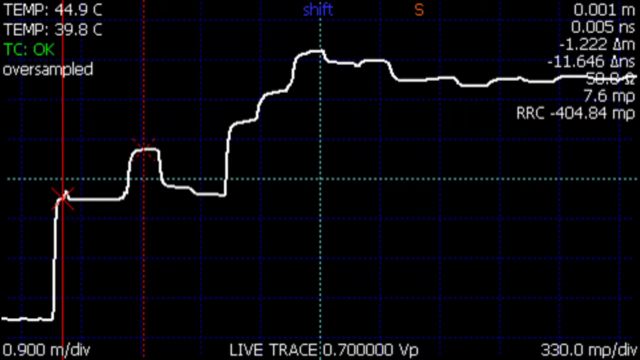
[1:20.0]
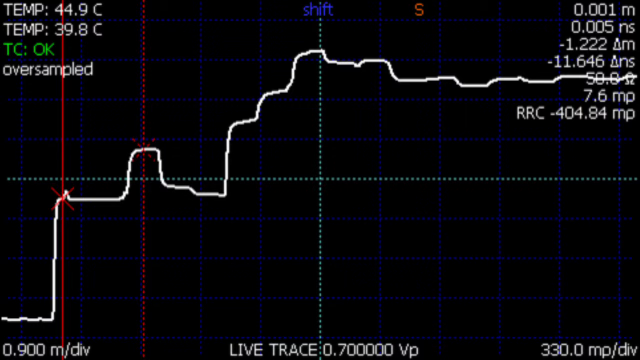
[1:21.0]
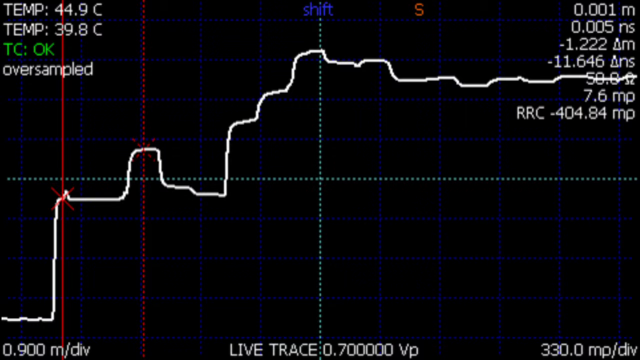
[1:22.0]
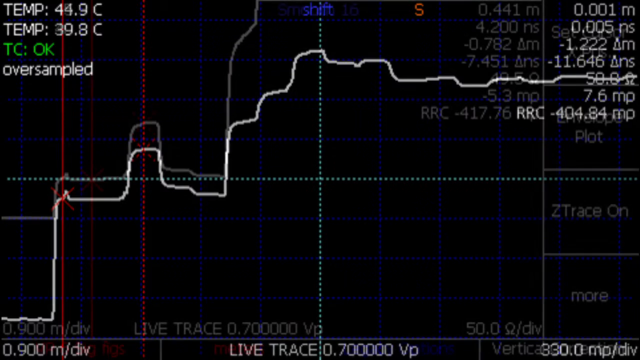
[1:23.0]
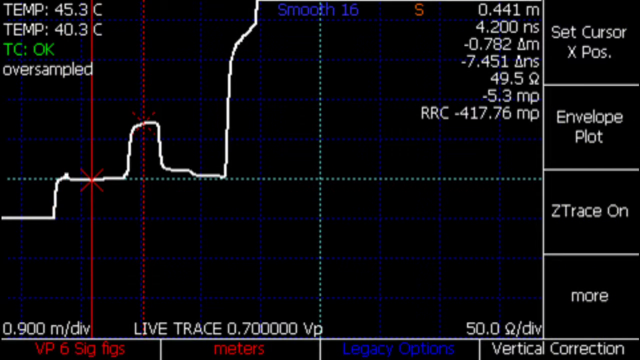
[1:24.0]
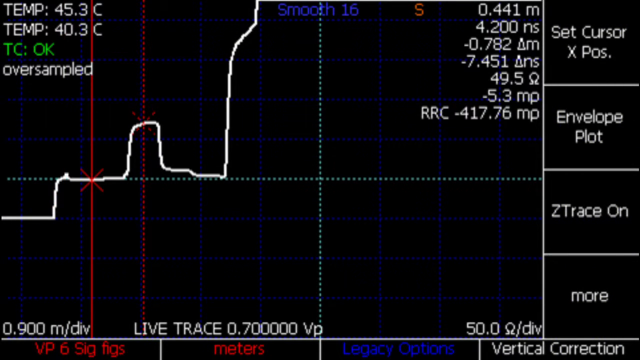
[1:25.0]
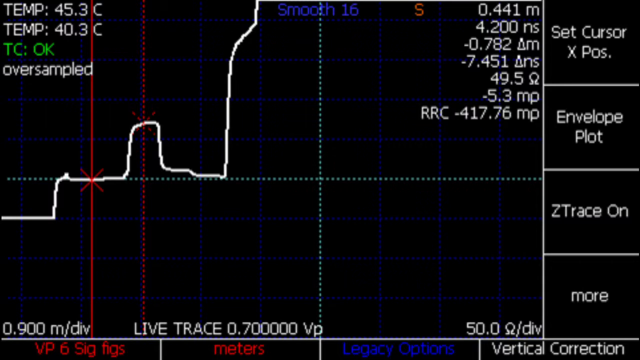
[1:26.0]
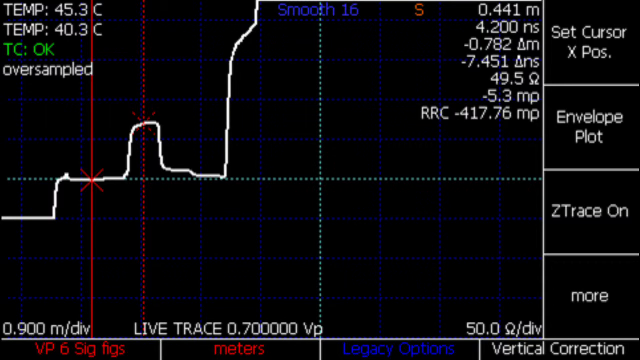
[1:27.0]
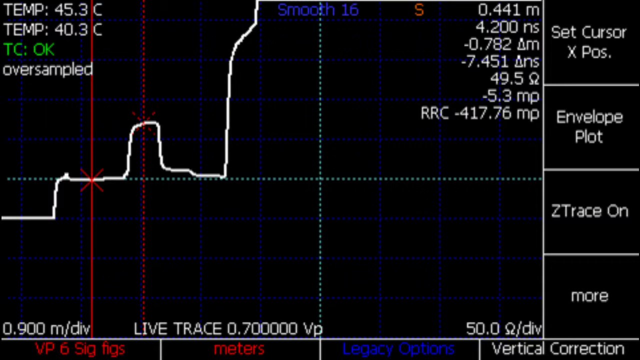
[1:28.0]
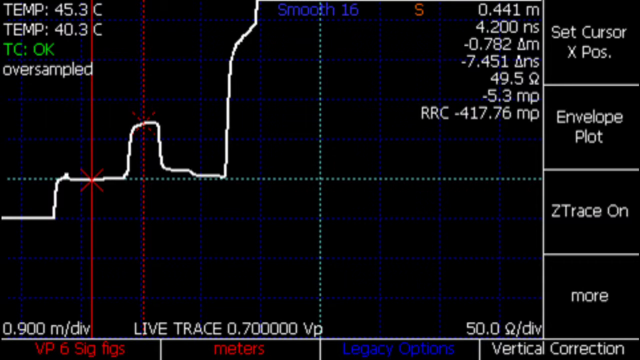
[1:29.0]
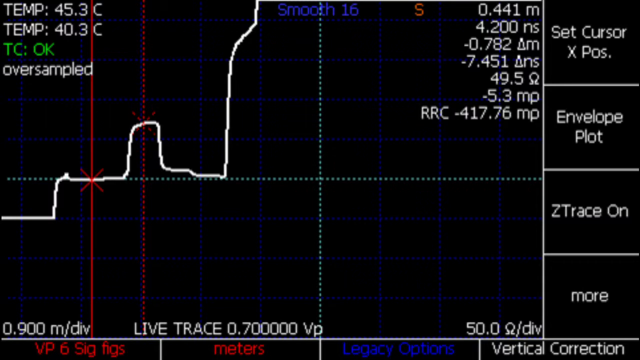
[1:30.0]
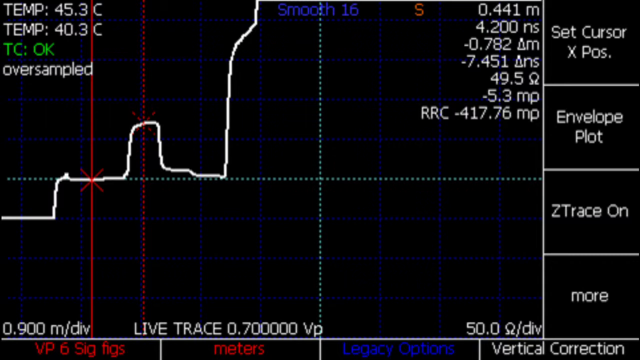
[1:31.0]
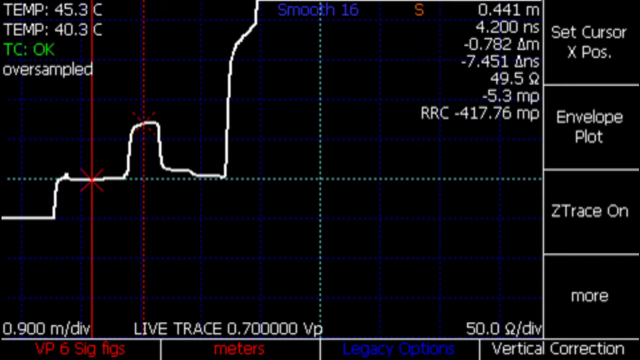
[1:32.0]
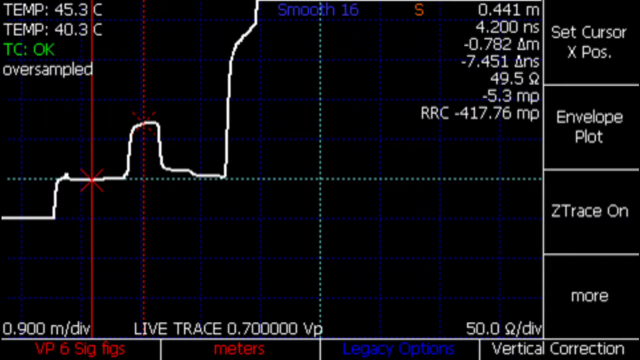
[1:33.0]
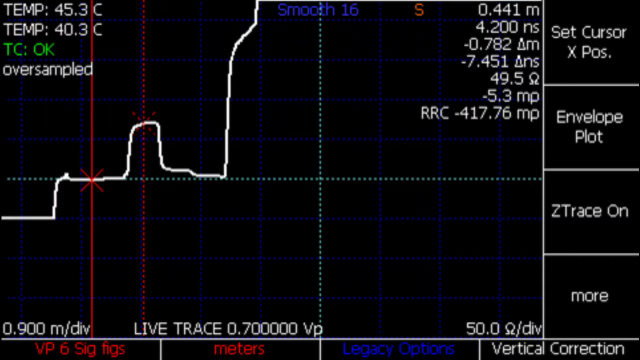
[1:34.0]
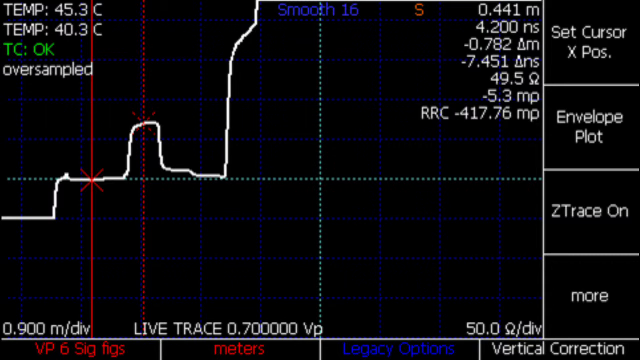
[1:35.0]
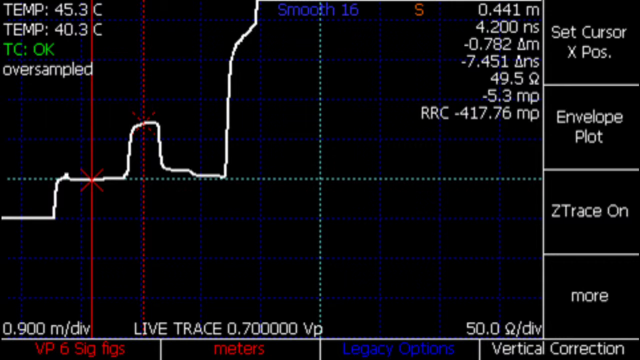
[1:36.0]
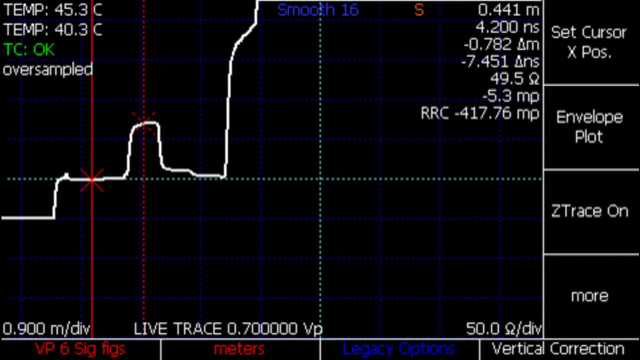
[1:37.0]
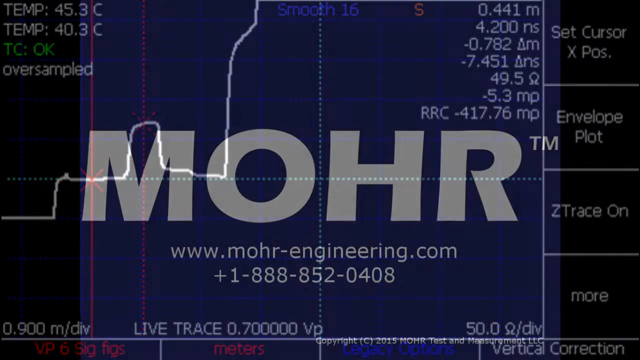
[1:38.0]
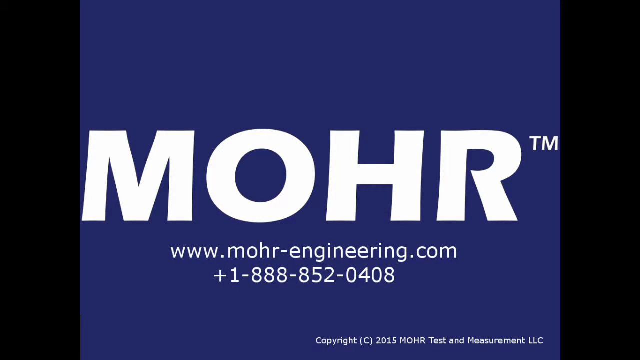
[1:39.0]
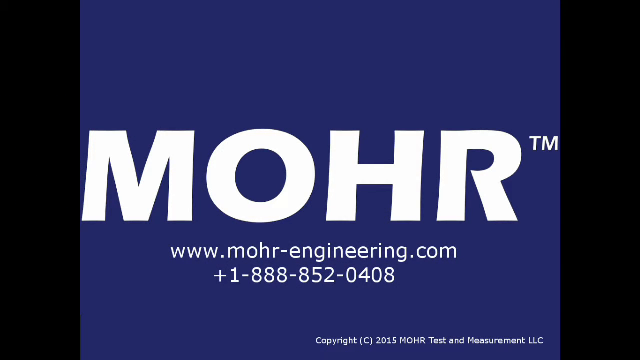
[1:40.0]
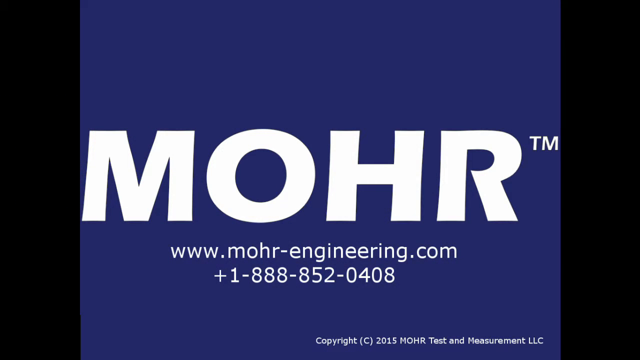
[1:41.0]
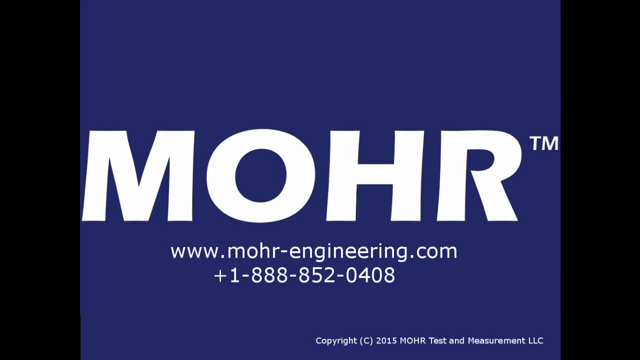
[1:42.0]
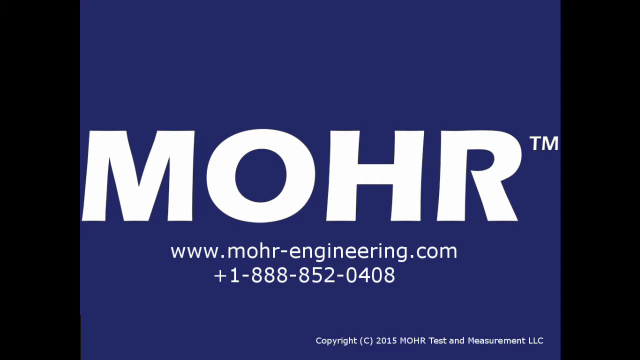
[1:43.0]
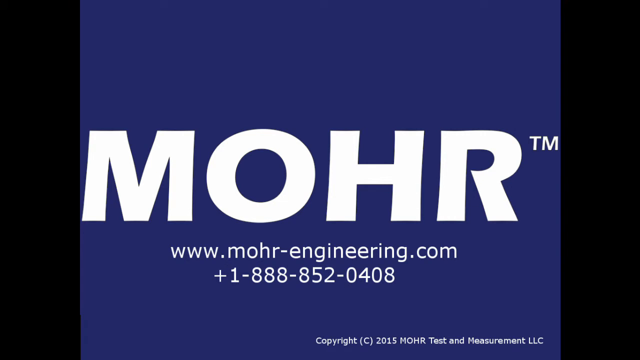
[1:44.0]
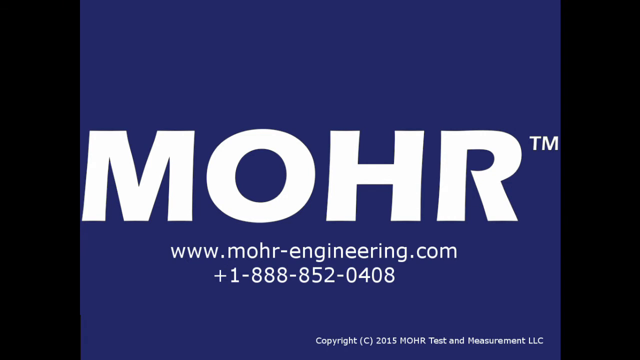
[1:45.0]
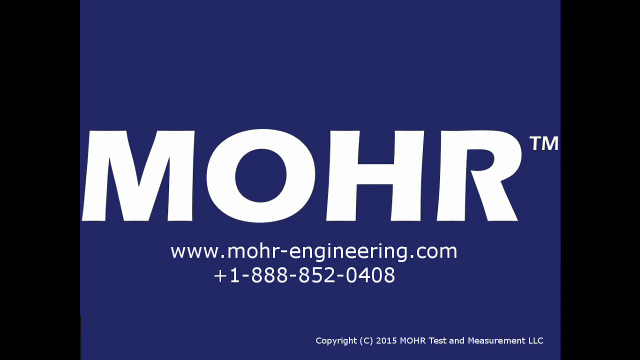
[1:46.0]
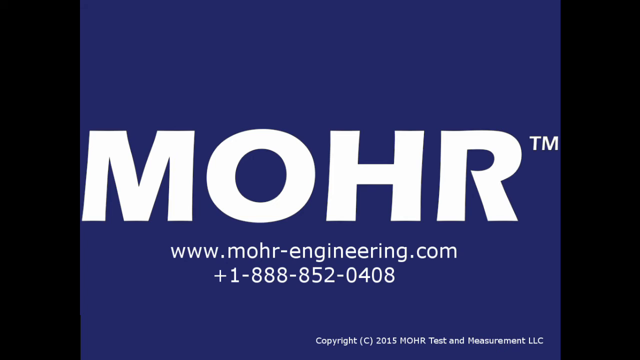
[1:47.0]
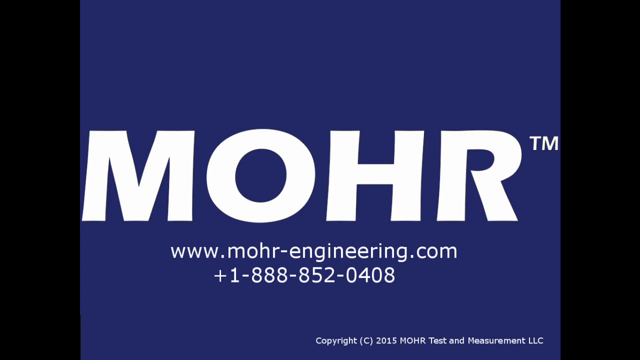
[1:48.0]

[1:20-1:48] An image of some kind of LCD screen monitor is shown. The monitor has a grid layout with a solid white line forming some kind of graph pattern. On the right side are four boxes with text inside them, like a menu option list. Text data overlays the graph. A red line runs vertically down the graph, with an X marking a point where two lines meet, and further along a red dashed line also has an X marking where two points meet on the graph. The video then transitions to an outro screen with a blue background, where the words "MOHR-tm" appear in large white text with a web address and phone number below. This screen is held for about 10 seconds.